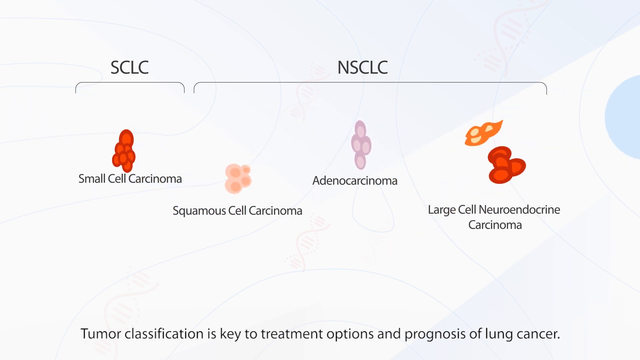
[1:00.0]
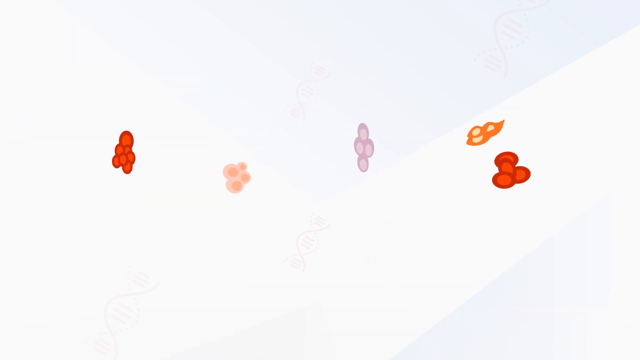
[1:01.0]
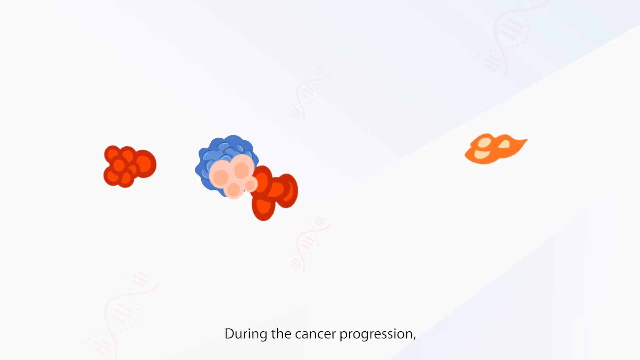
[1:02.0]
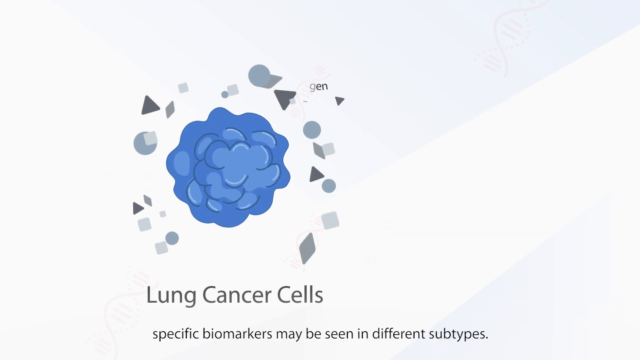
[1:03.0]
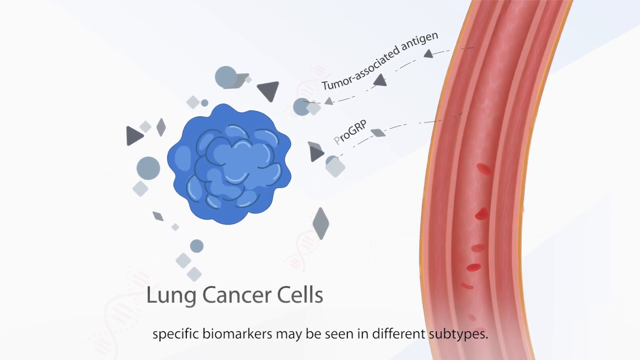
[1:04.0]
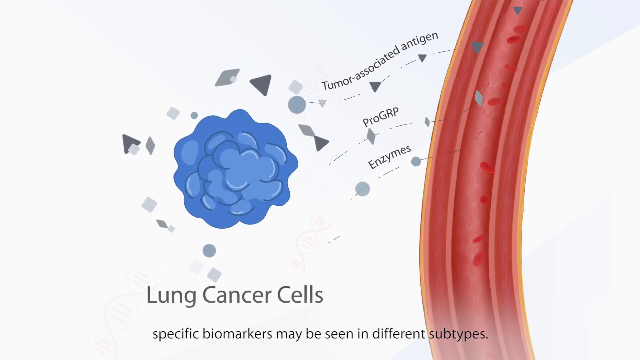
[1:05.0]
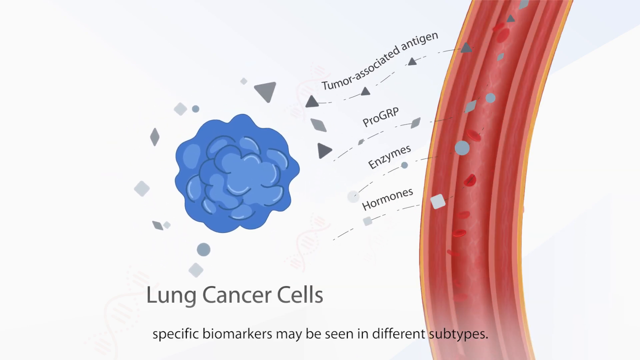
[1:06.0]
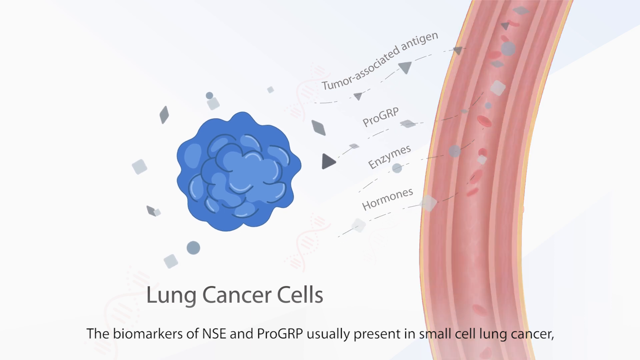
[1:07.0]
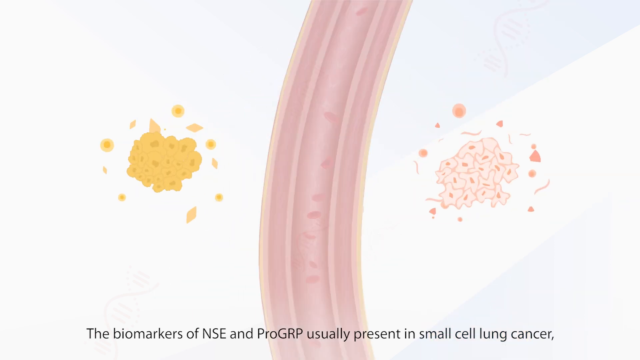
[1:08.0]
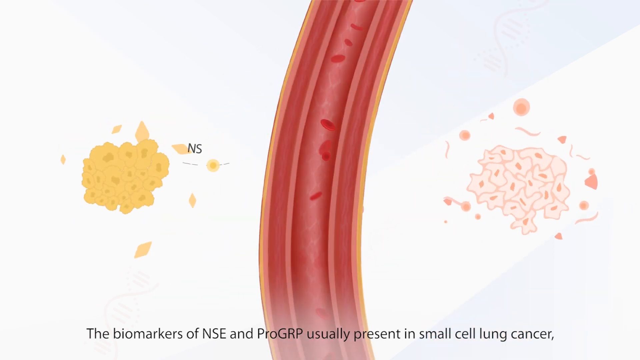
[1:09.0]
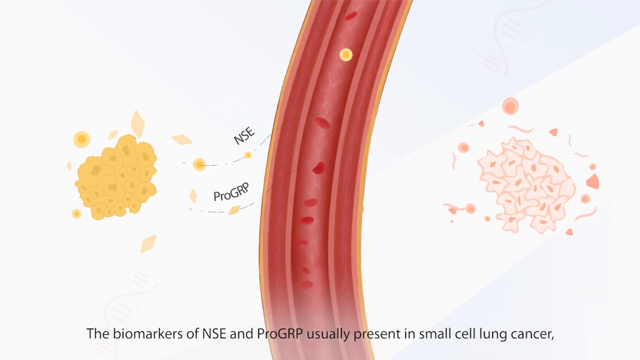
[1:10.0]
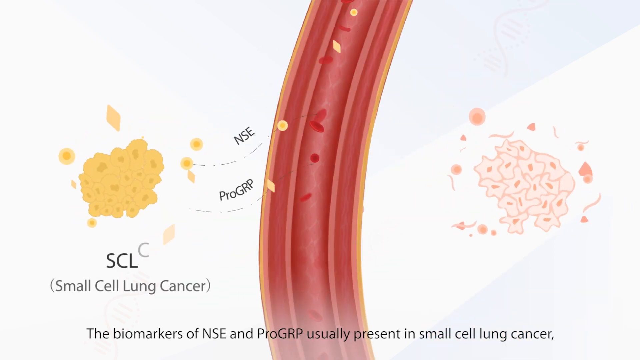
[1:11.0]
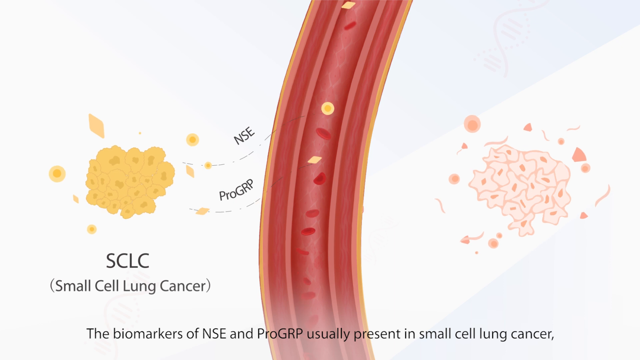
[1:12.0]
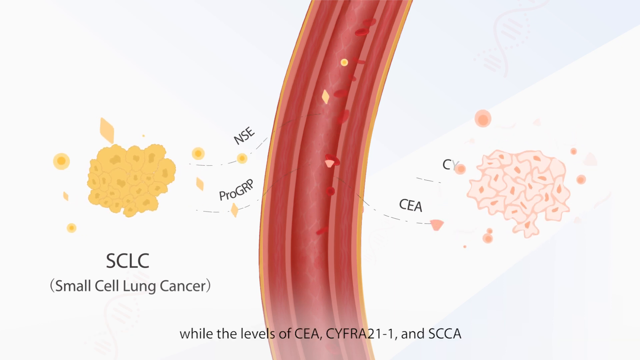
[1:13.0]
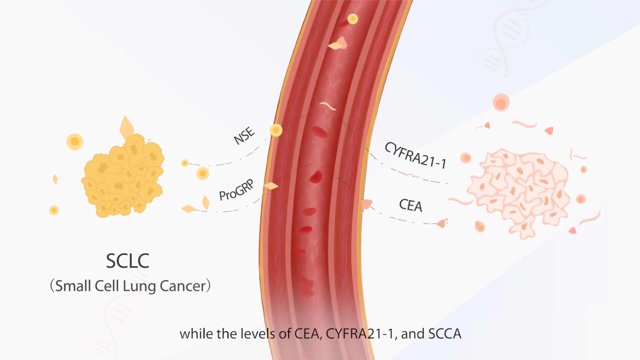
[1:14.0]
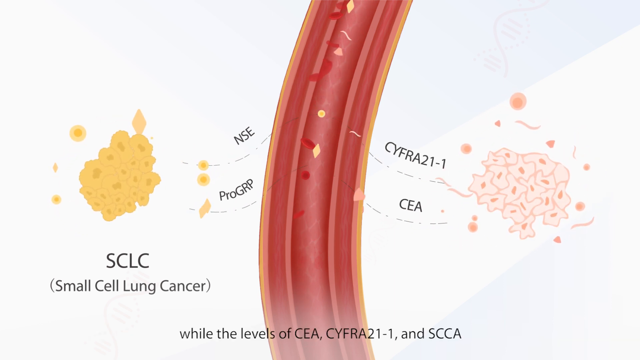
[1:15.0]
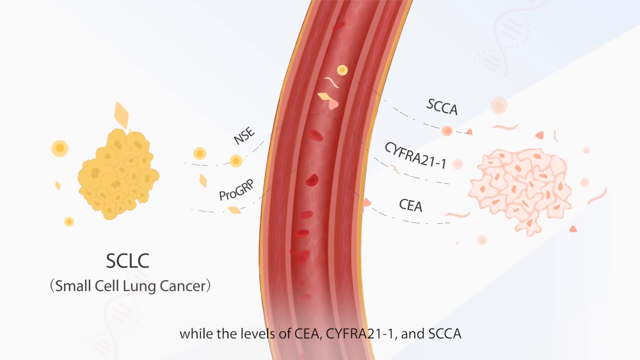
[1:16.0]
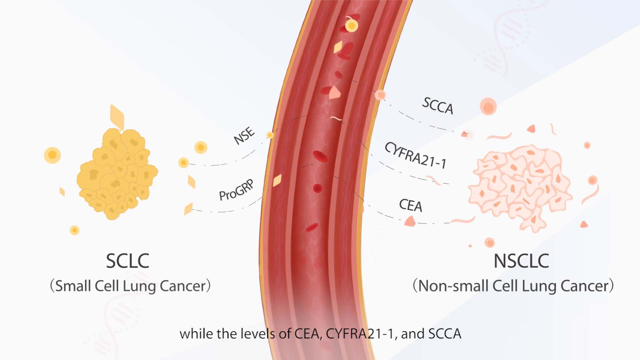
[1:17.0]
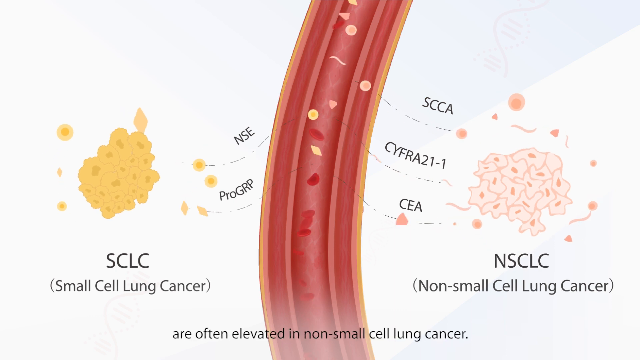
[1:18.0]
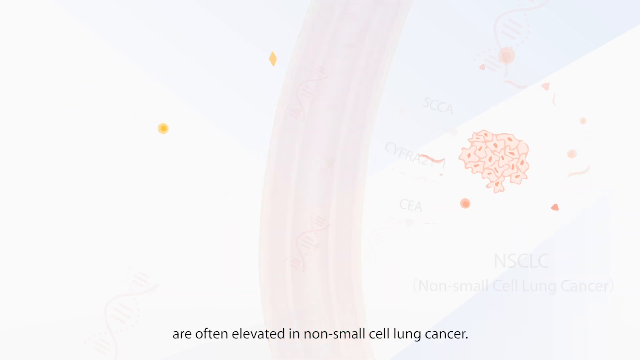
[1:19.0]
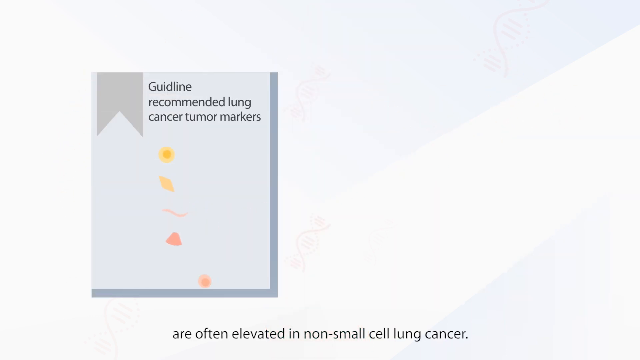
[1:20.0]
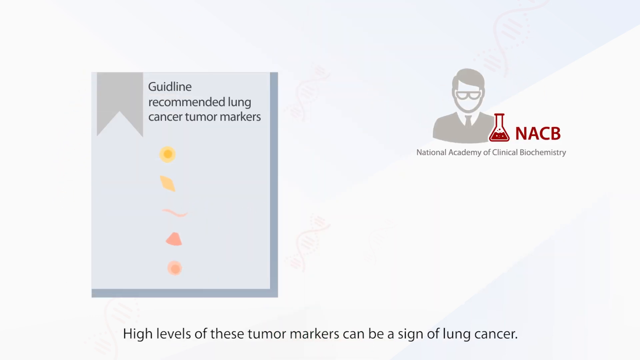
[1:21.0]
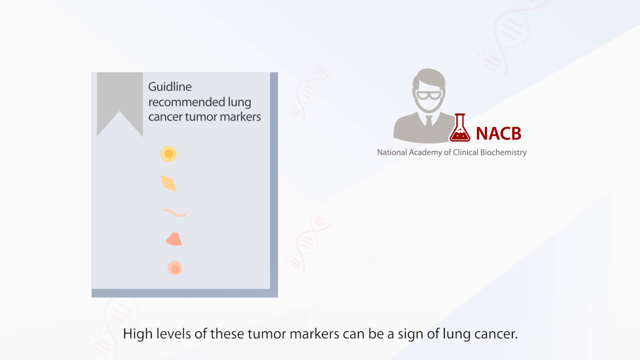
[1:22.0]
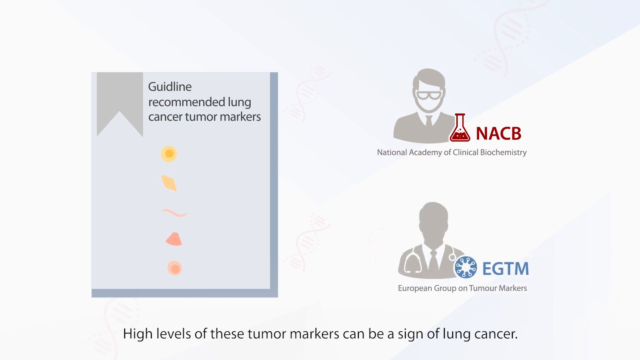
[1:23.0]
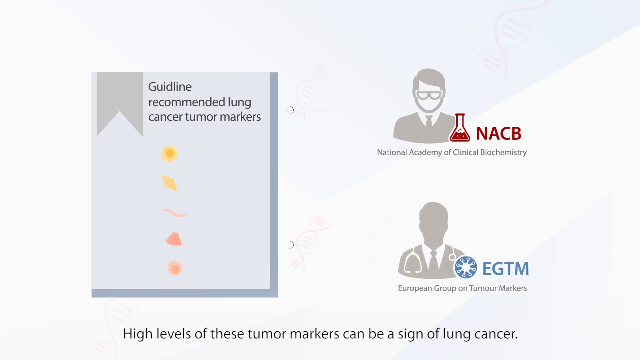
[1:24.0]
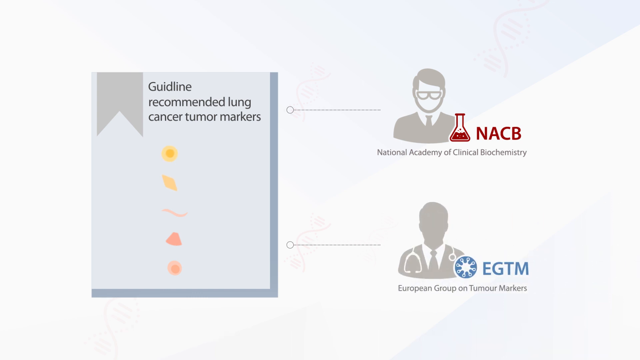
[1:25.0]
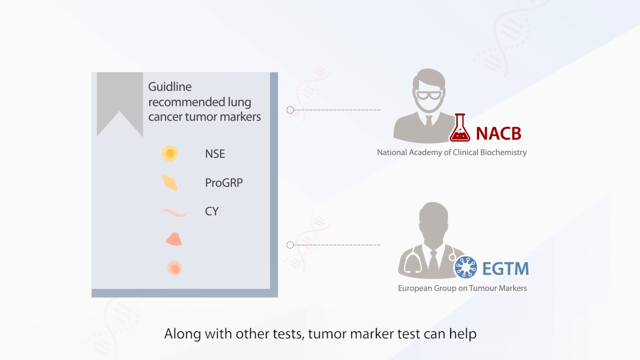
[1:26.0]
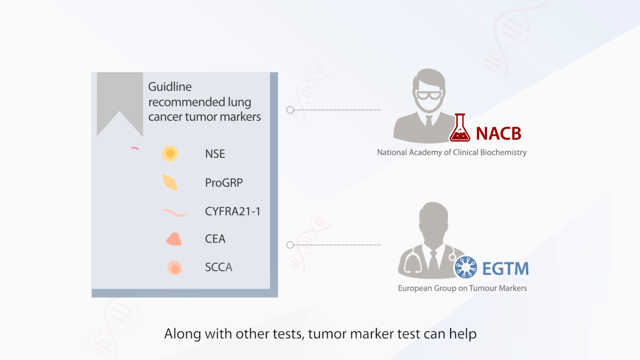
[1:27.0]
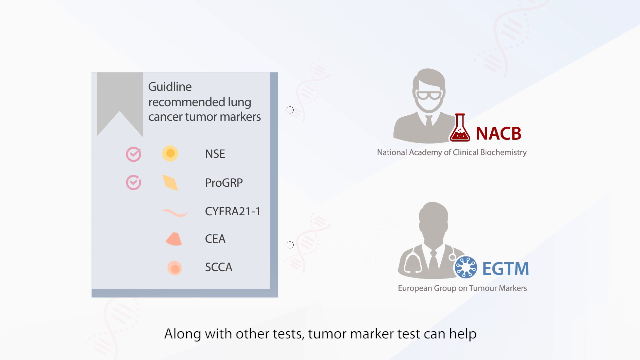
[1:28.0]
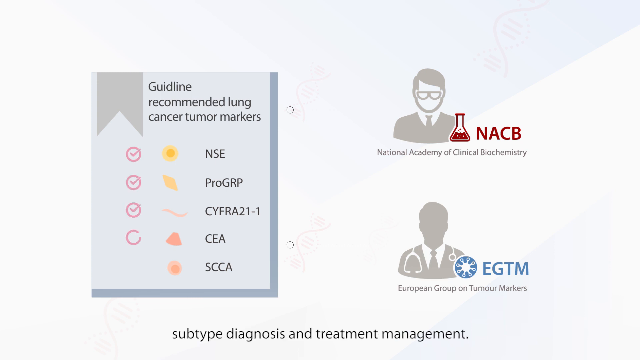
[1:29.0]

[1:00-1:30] The cells line up from left to right: the small cell carcinoma on the far left, then the squamous cell carcinoma, the adenocarcinoma, and the large cell neuroendocrine carcinoma. Two brackets appear above them, the left one over the small cell carcinoma and the right one over the other three, with "SCLC" above the small cell carcinoma and "NSCLC" above the others. The lines and text disappear, and the four carcinoma images fly across the screen and collide. In the middle of the screen they mutate into a large blue ball of cells with the text "lung cancer cell" underneath. A vascular system appears on the right, with red blood cells moving from the bottom of the screen up to the top, and thin lines connect the lung cancer cell to it. The words "tumor-associated antigen", "pro-GRP", "enzymes" and "hormones" appear, and dark grey shapes come off the cancer cells and move into the vascular system. The image changes to show different types of cancer cells, with the vascular system running through the centre from bottom to top and red blood cells running through it. On the left is a yellow small cell lung cancer, with "NSE" and "pro-GRP" in yellow entering the bloodstream. From the right, a different type of carcinoma has "CYFRA21-1" and "CEA" breaking off in pink and moving into the bloodstream; it is labelled "non-small cell lung cancer", and the text "SCCA" also appears and runs into the bloodstream. The images shrink until they disappear, leaving a white screen with a grey box to the side. In the top quarter on the right side is the logo for the National Academy of Clinical Biochemistry.